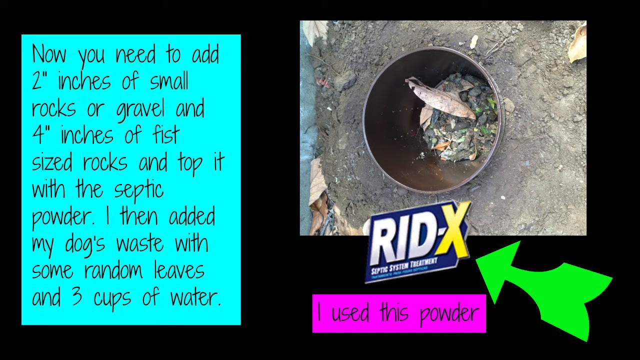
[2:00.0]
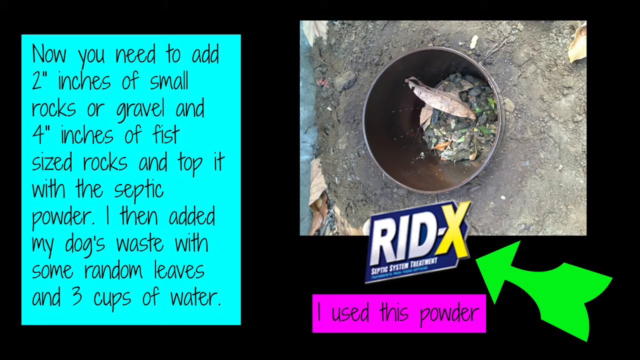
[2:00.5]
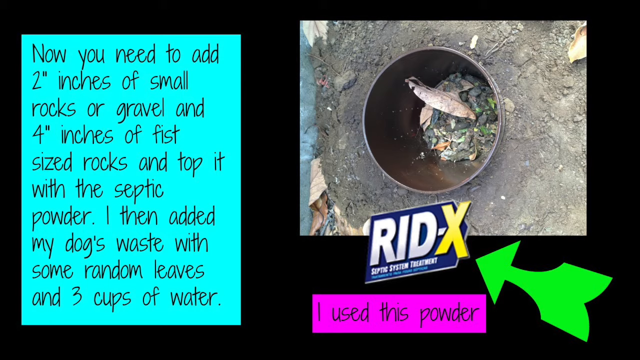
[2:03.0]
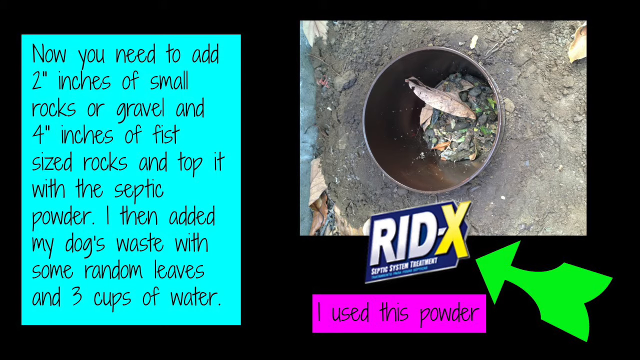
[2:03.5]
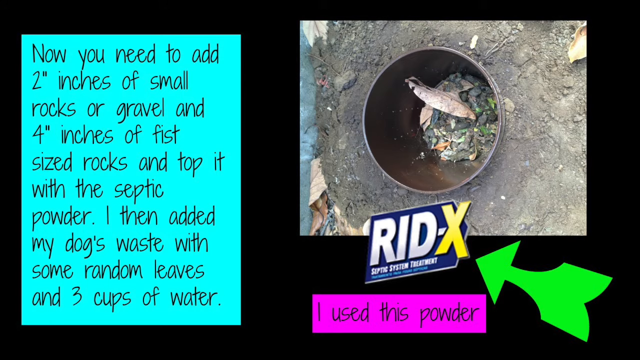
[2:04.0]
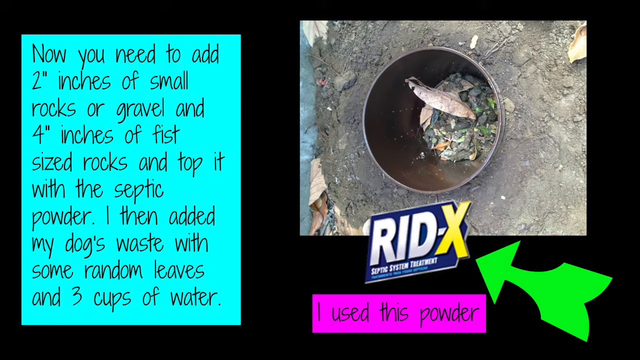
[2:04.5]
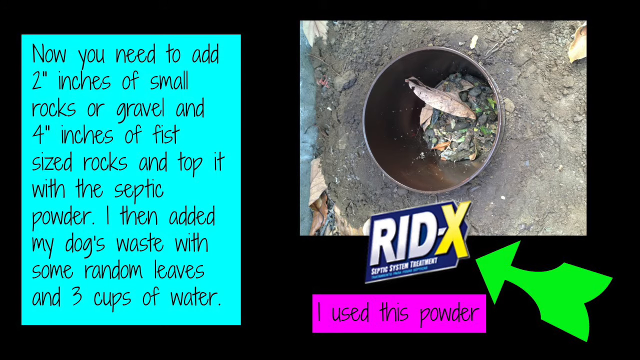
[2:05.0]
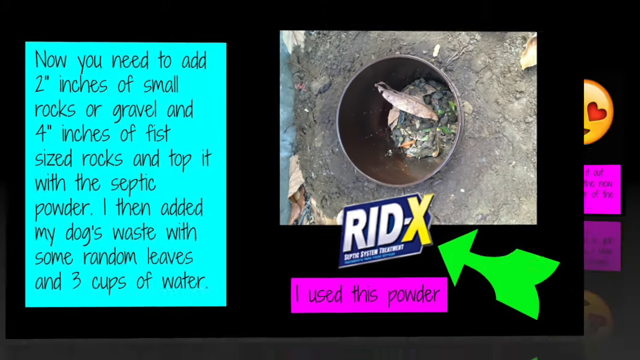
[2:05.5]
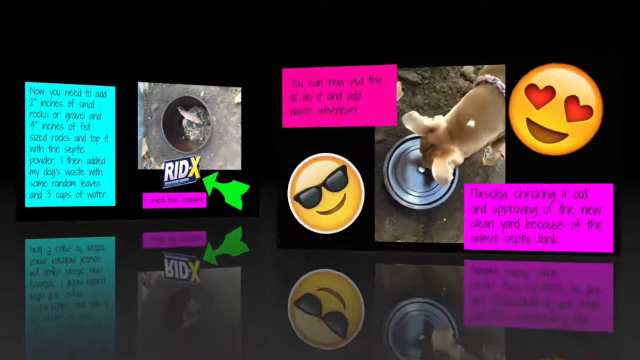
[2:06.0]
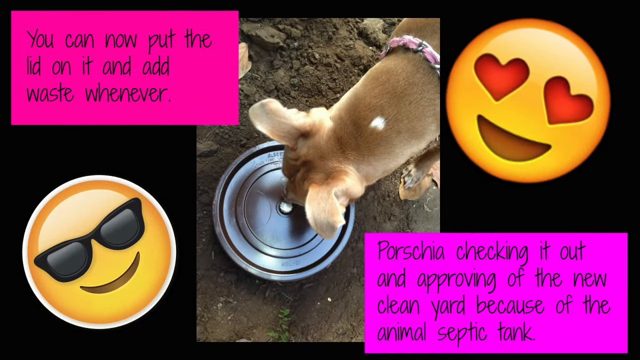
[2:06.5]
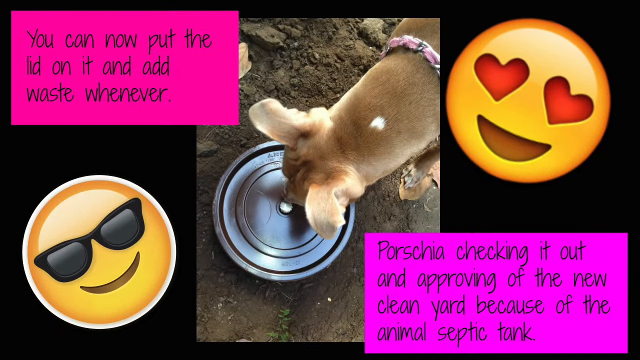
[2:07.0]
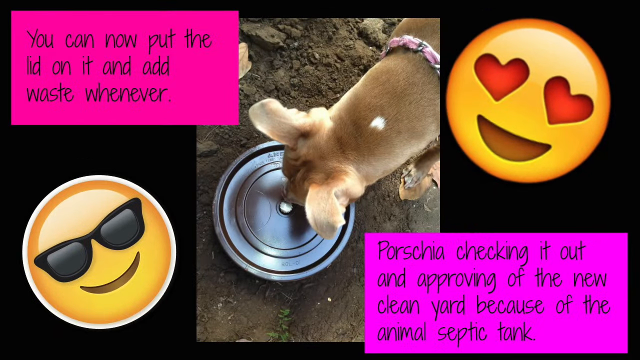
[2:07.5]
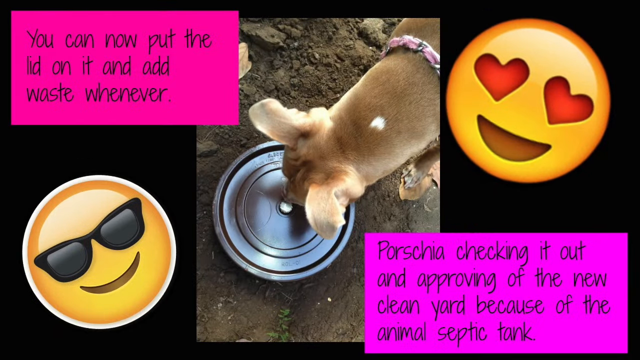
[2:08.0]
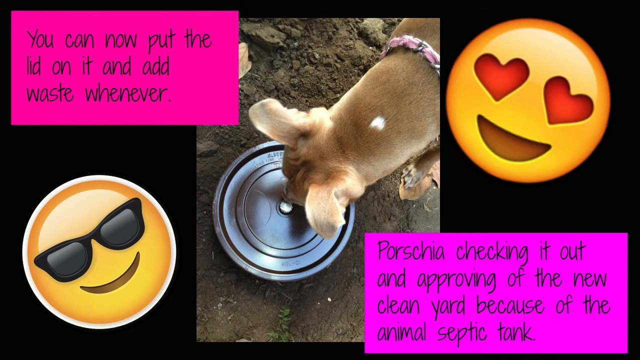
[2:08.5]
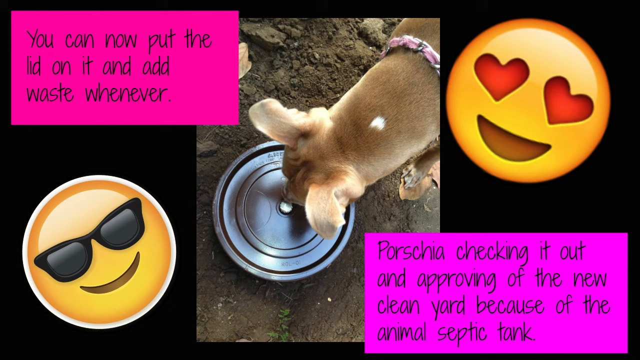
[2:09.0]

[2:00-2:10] A 3D-effect transition leads to a new static slide with a few pieces of information. In the top left, text on a pink background reads "you can now put the lid on it and add waste whenever." In the bottom right, text on a lighter pink background reads "checking it out and approving of the new clean yard because of the animal septic tank." In the middle is an overhead photo of a dog, showing its head and ears, with its nose on the lid of the septic tank system, a bucket dug into the ground. In the top right is a smiling face emoji with hearts for eyes, and in the bottom left is a smiling emoji wearing sunglasses.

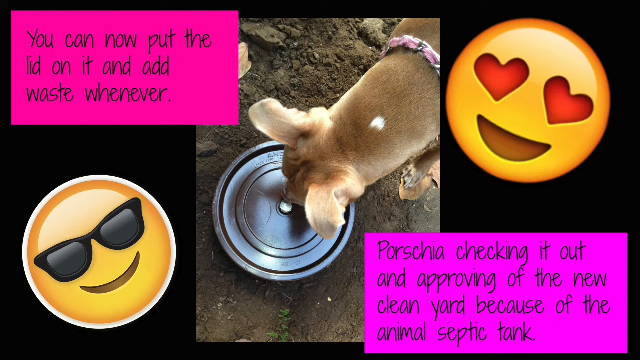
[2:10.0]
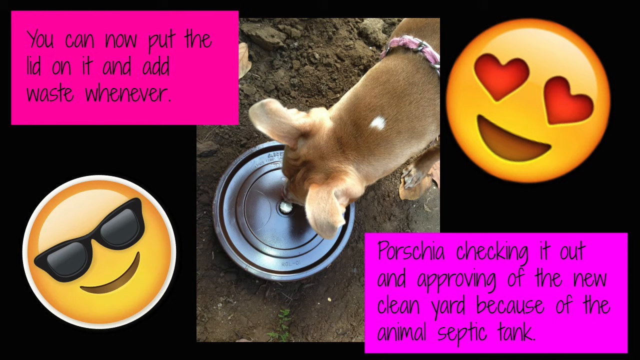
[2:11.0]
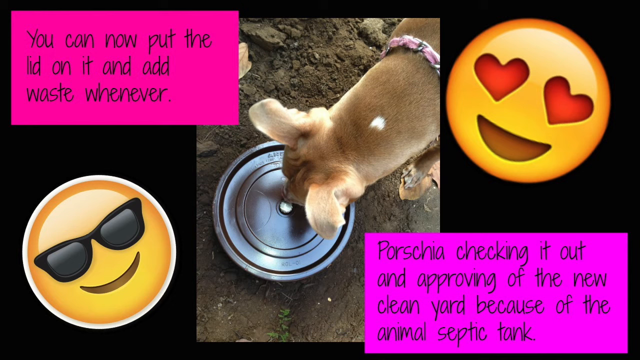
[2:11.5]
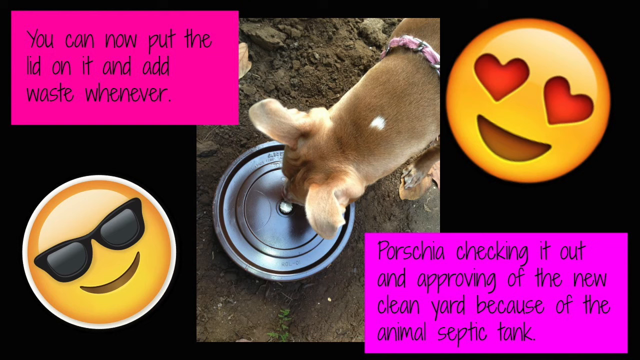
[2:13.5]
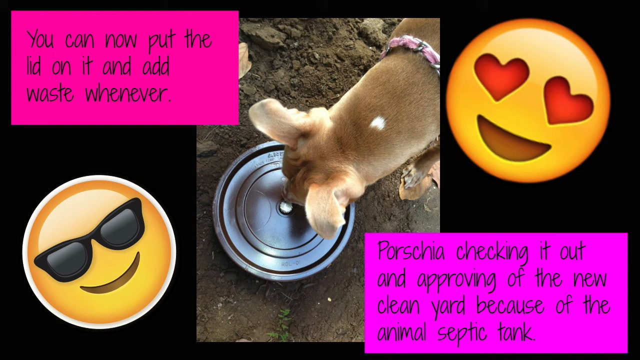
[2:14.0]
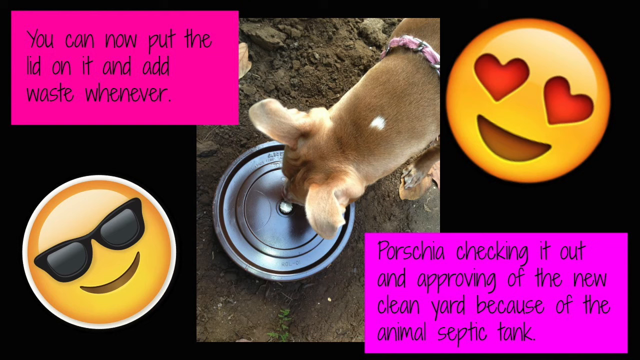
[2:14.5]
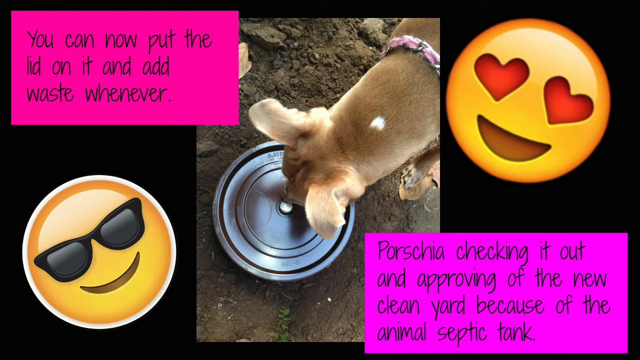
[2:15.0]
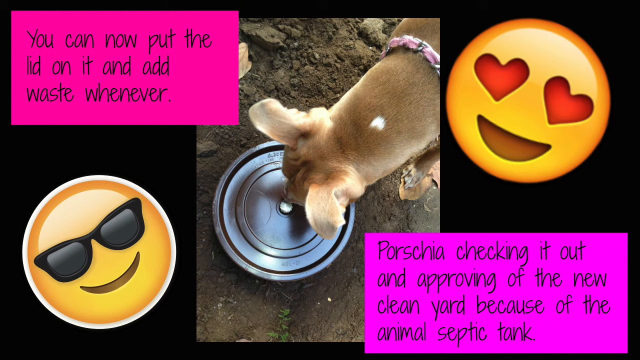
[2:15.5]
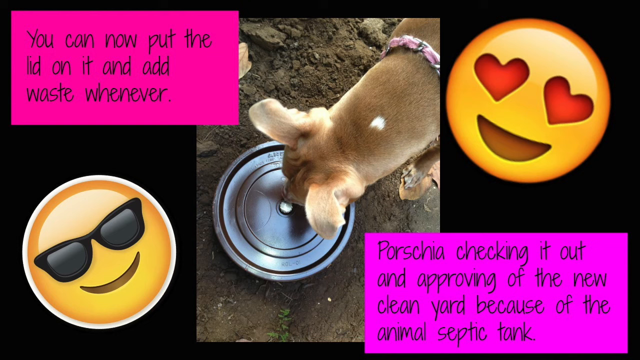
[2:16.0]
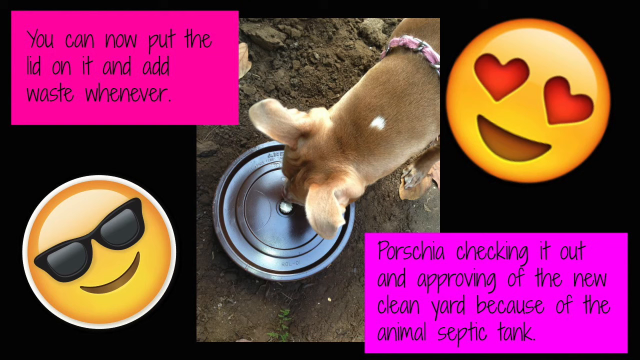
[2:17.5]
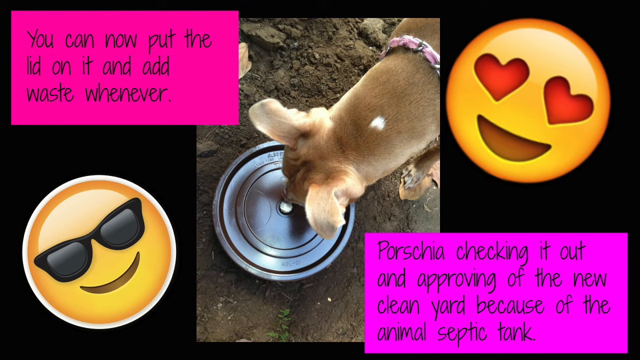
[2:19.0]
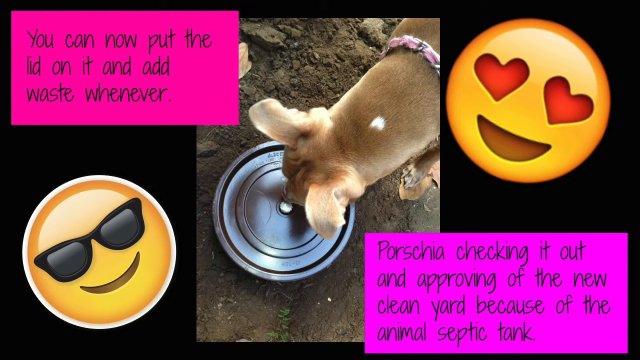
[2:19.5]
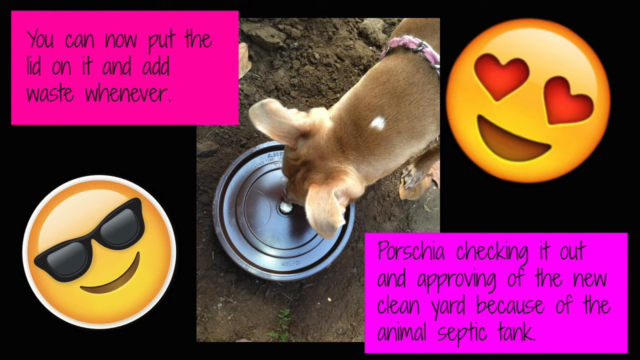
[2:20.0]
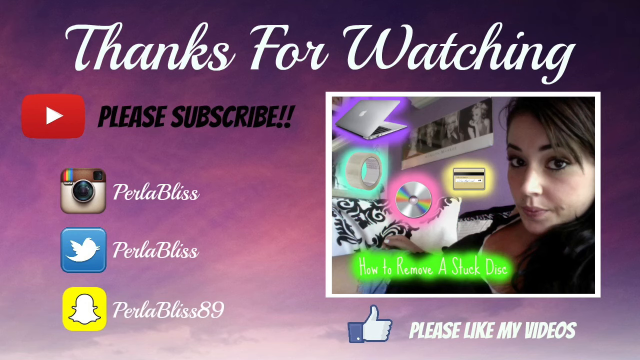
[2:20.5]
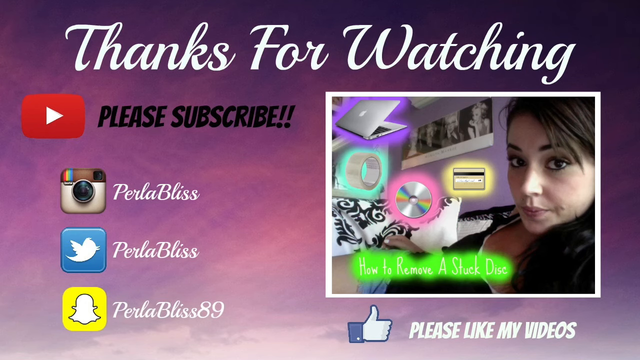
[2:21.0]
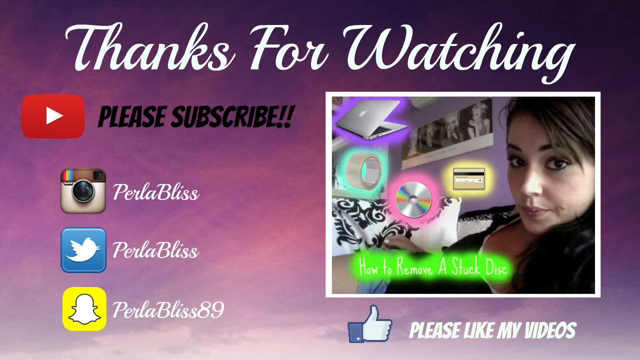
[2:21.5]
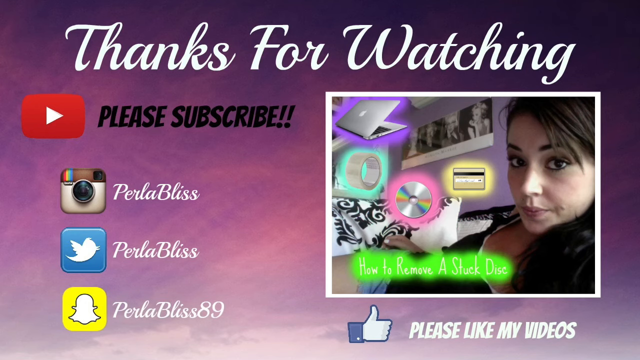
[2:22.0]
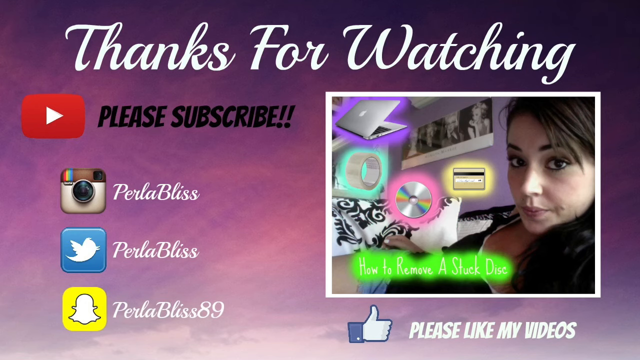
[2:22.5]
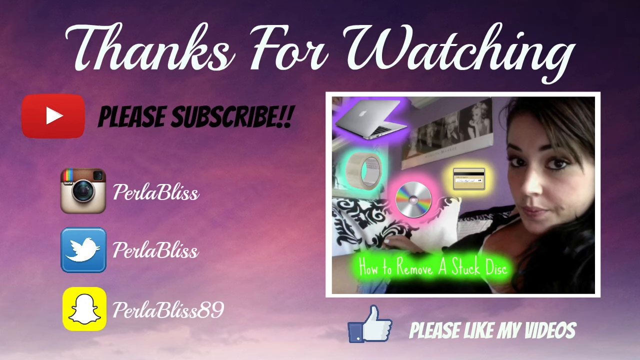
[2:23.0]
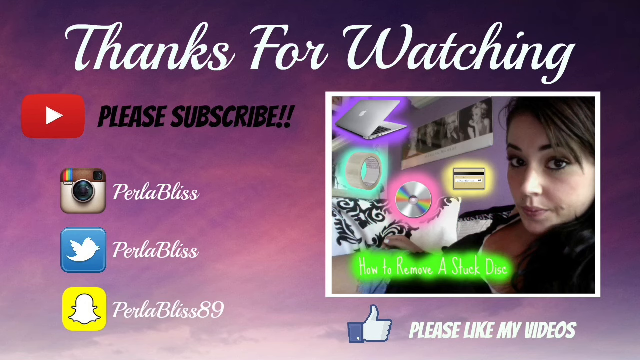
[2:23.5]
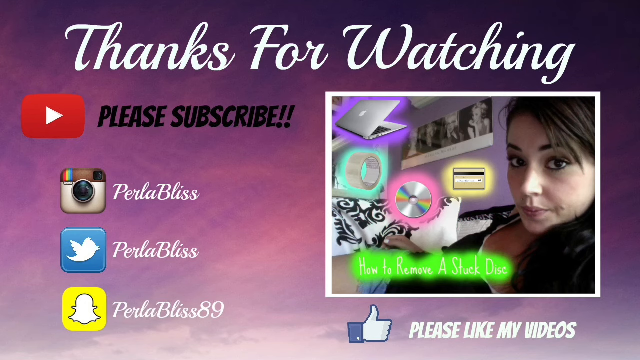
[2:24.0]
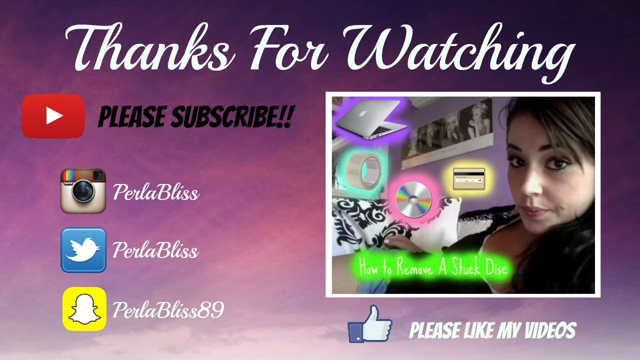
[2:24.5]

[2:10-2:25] The same slide stays on screen for the first half, then a "thanks for watching" end screen for the YouTube channel appears. "thanks for watching" is written in large white italic text. Underneath, in the left-hand column, is a YouTube logo with "please subscribe" in bold black capitals. Below that are three logos, for Instagram, Twitter and Snapchat. To their right are the handles "Perula Bliss," "Perula Bliss" for Twitter, and "Perula Bliss 89" for Snapchat. On the right-hand side is a photo of a woman lying on a couch, with her head on the right side of the photo. Clip art of a laptop, some sticky tape, a CD and the reverse of a credit card is dotted around the left and middle of the image, each with a differently coloured outline: purple, green, pink and yellow. Underneath, white text with a green outline reads "how to remove a stuck disc." Below the photo are a thumbs up, a Facebook icon and an emoji, and to the right of them "please like my videos" is written in white capitals.